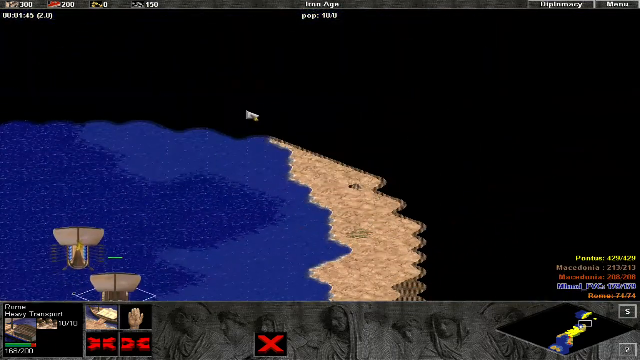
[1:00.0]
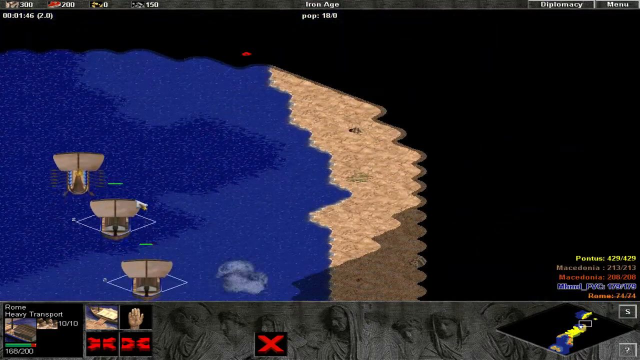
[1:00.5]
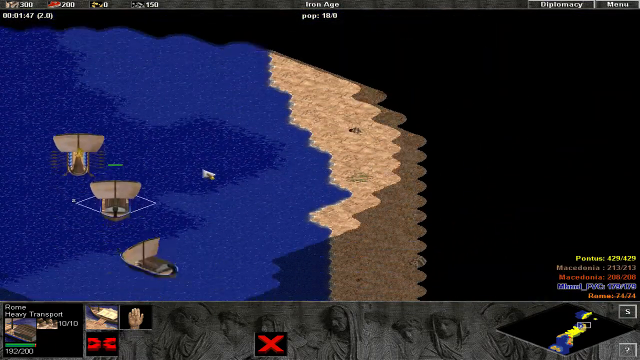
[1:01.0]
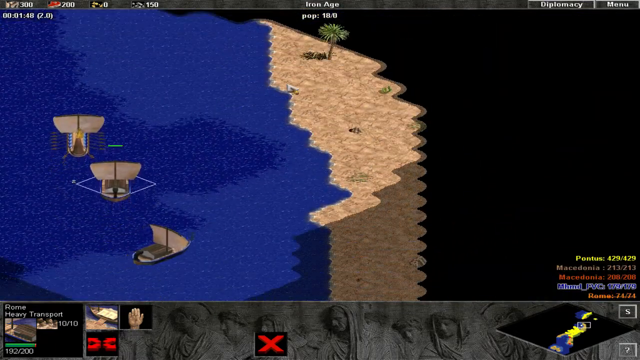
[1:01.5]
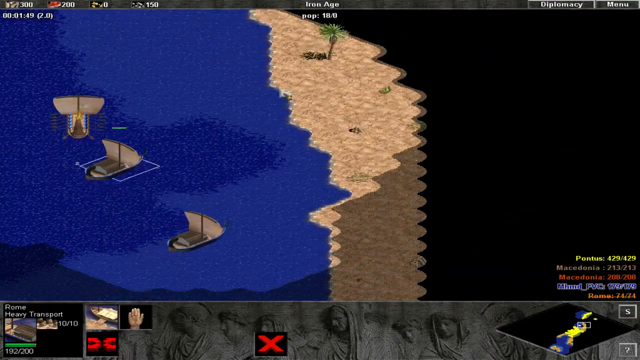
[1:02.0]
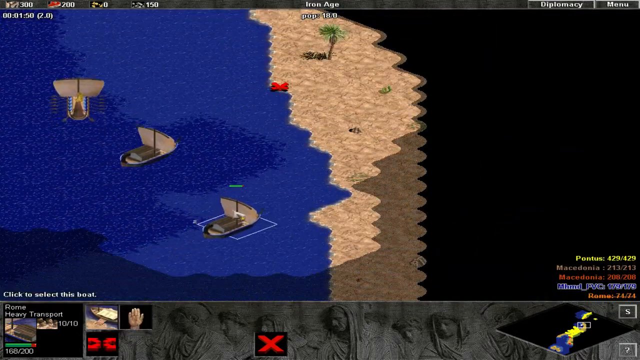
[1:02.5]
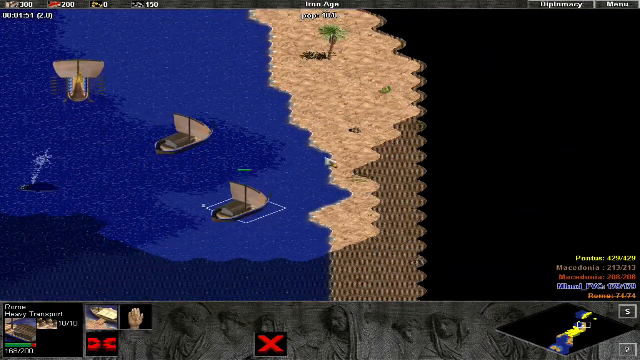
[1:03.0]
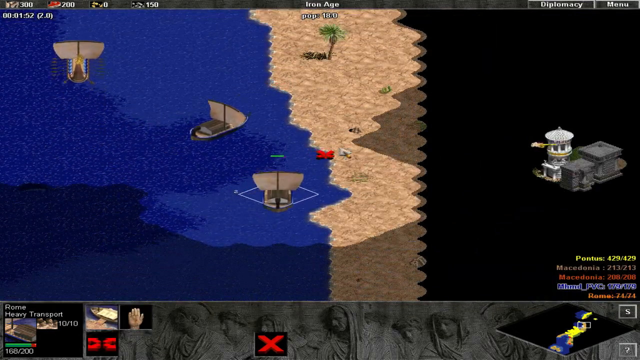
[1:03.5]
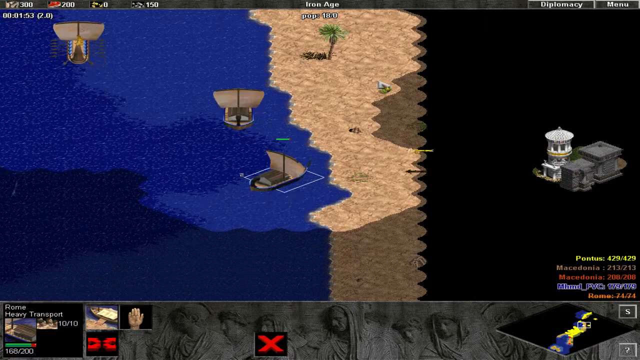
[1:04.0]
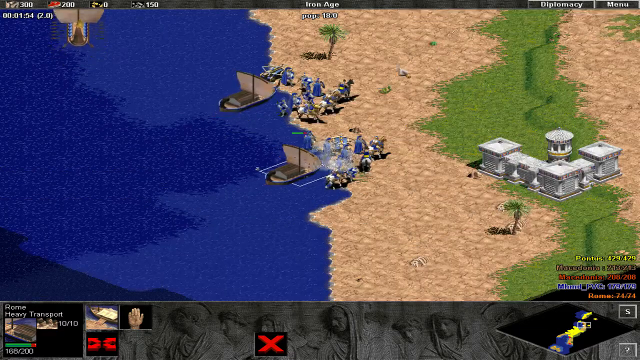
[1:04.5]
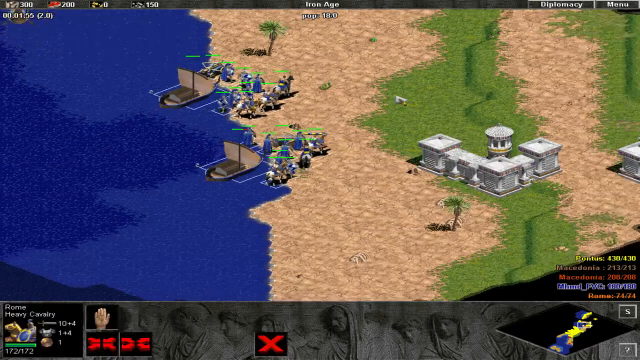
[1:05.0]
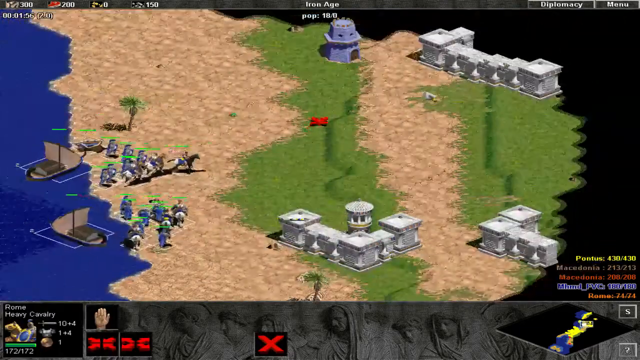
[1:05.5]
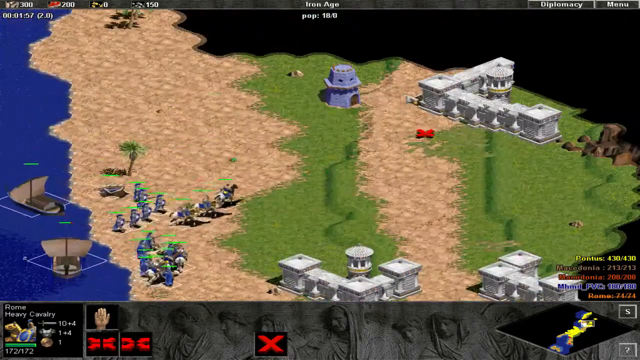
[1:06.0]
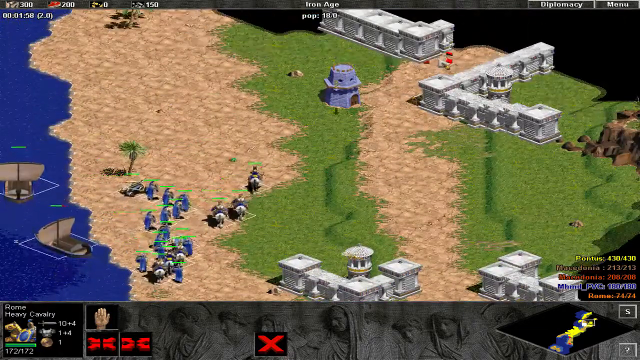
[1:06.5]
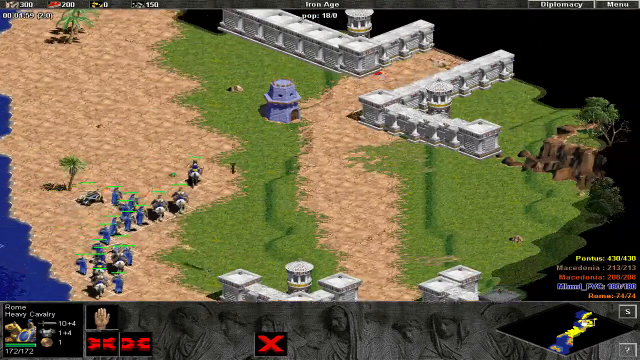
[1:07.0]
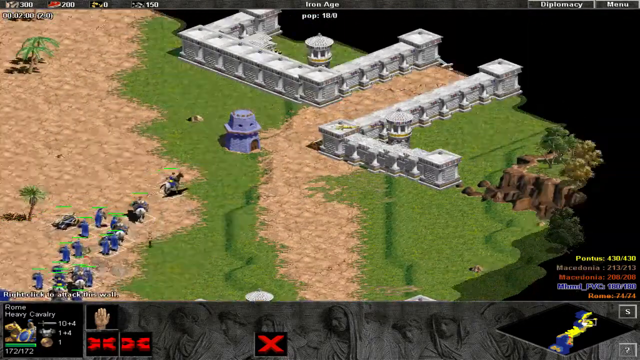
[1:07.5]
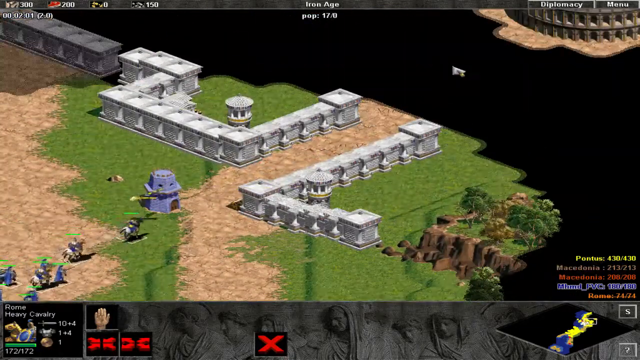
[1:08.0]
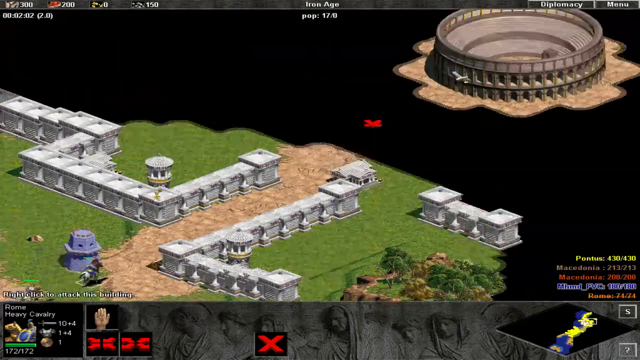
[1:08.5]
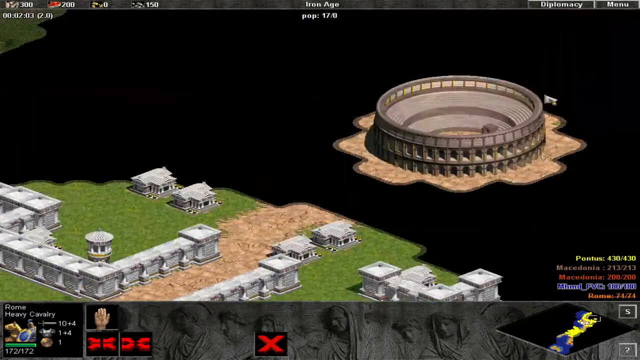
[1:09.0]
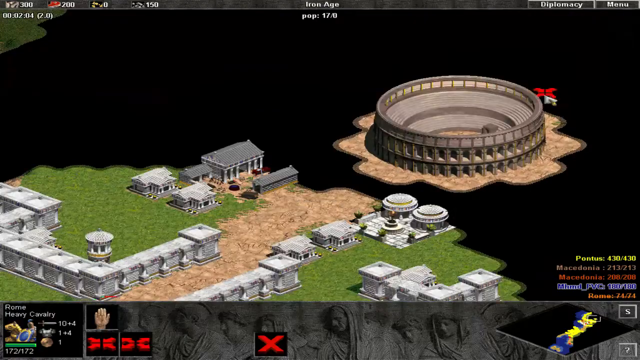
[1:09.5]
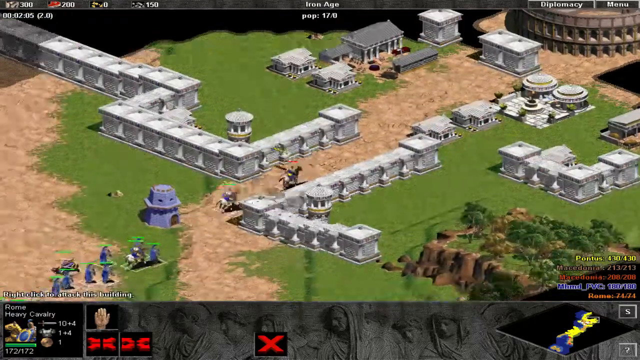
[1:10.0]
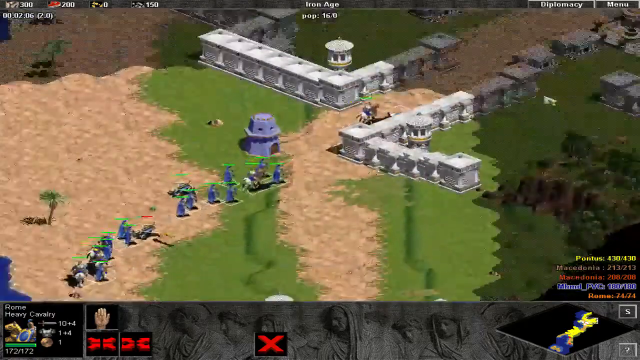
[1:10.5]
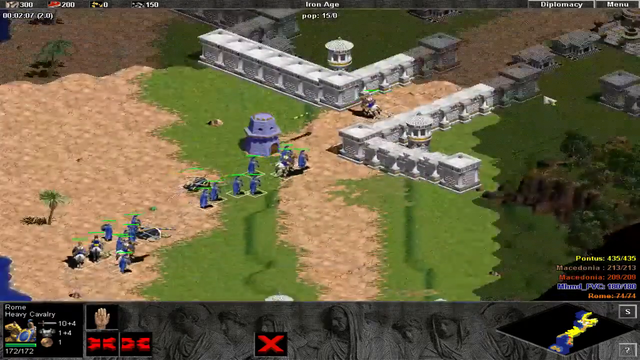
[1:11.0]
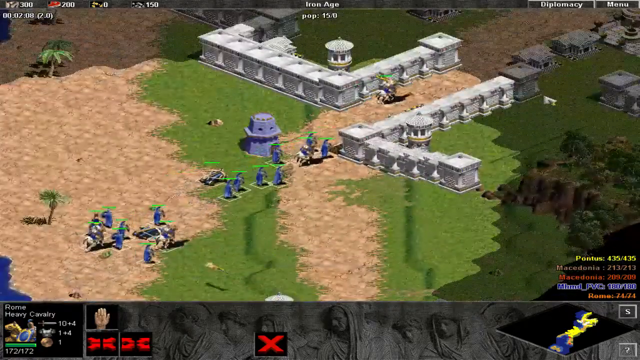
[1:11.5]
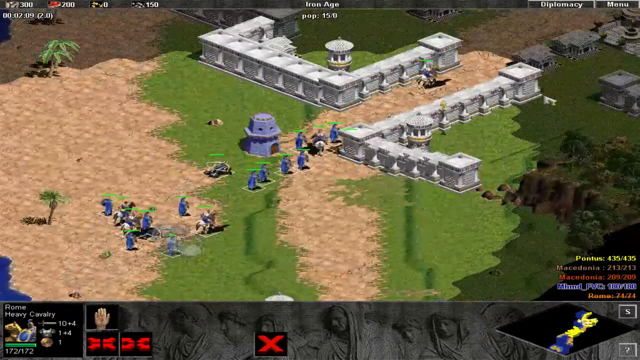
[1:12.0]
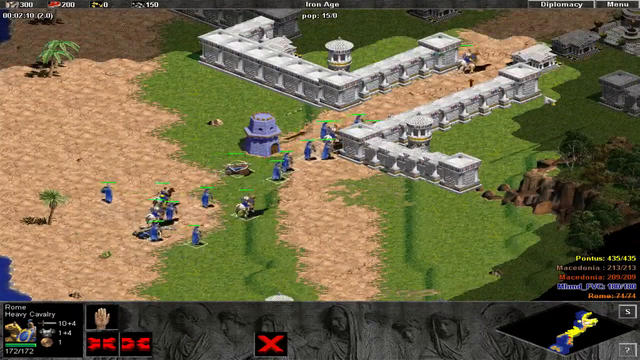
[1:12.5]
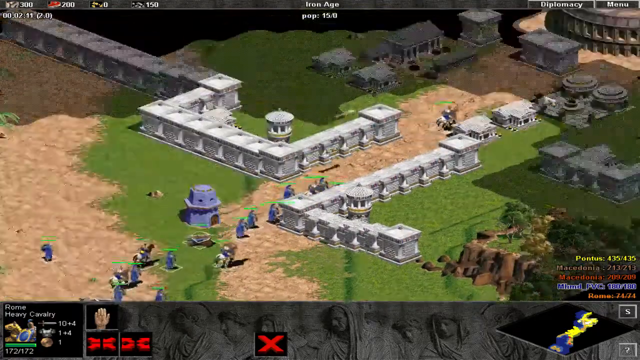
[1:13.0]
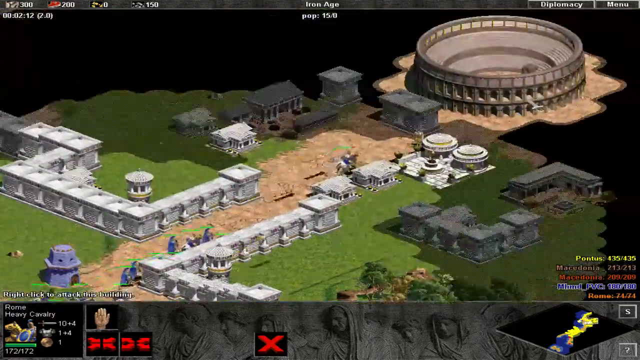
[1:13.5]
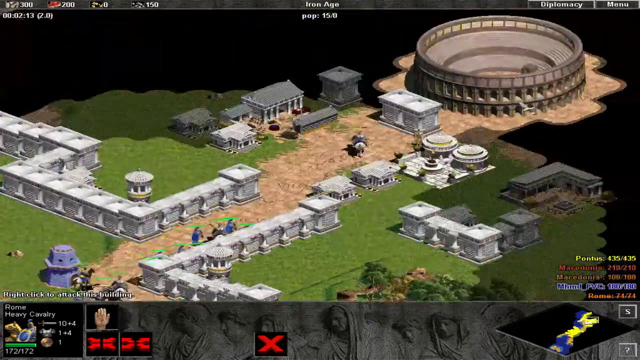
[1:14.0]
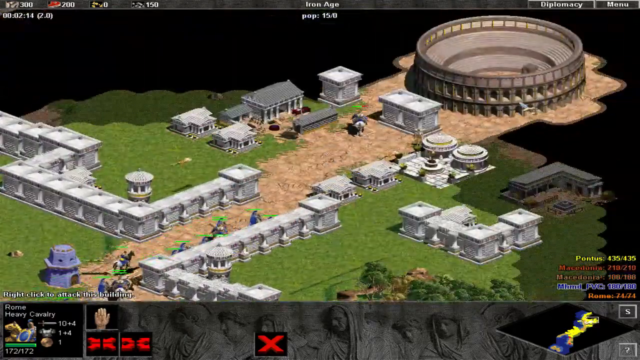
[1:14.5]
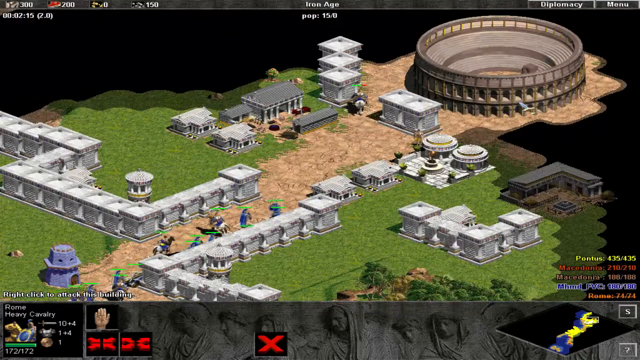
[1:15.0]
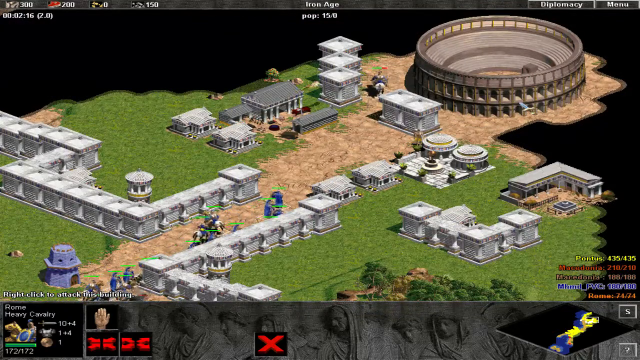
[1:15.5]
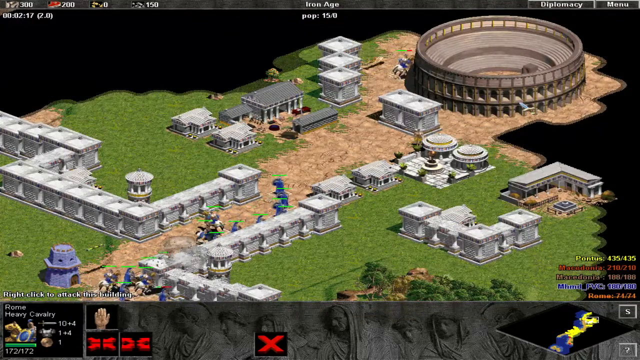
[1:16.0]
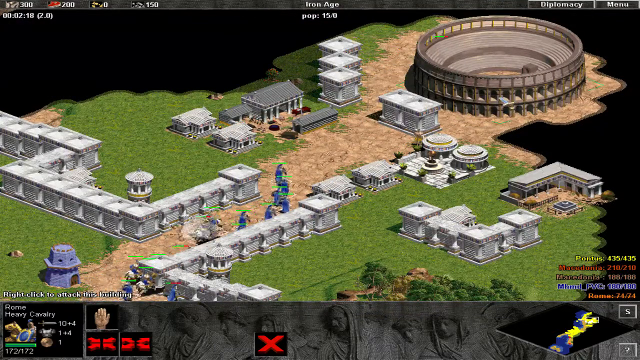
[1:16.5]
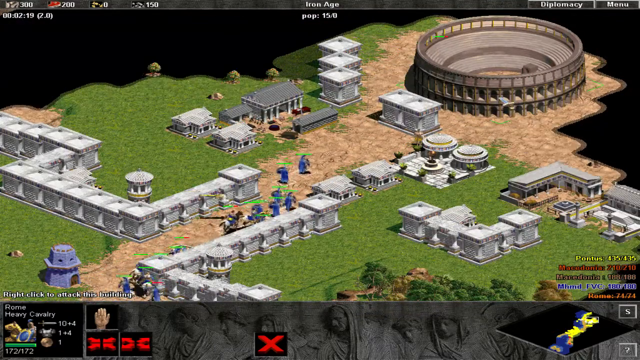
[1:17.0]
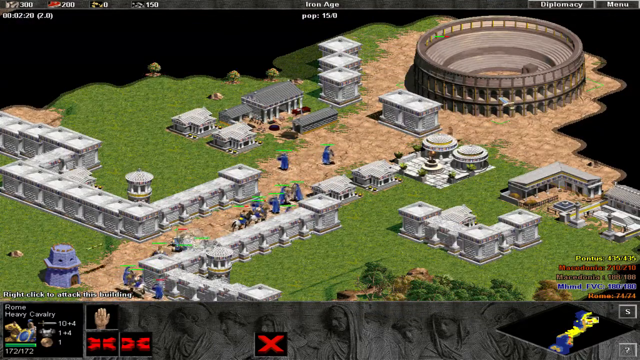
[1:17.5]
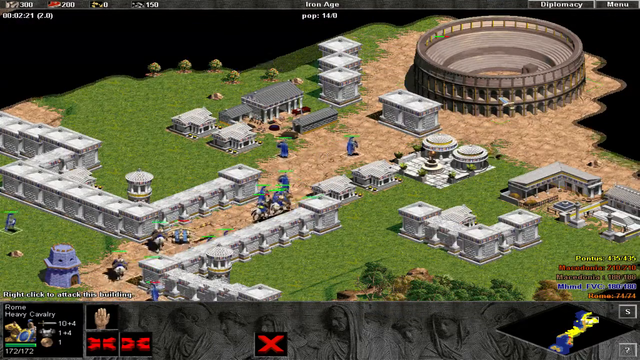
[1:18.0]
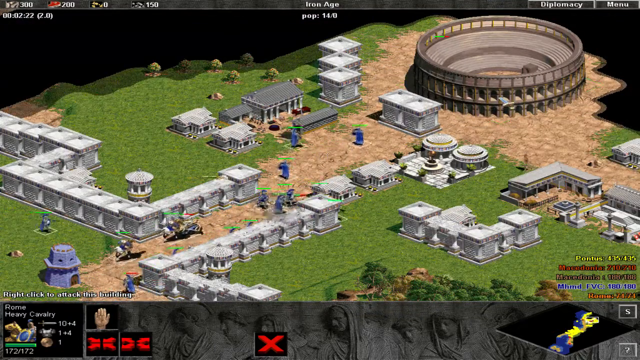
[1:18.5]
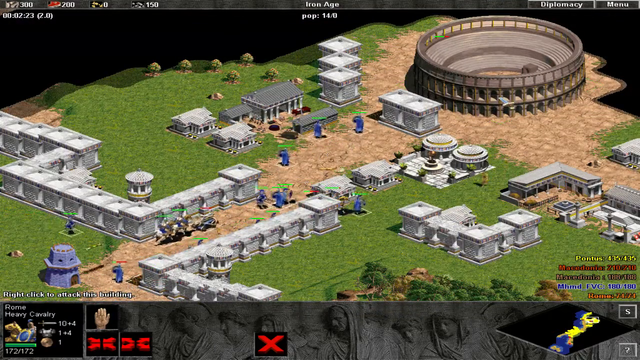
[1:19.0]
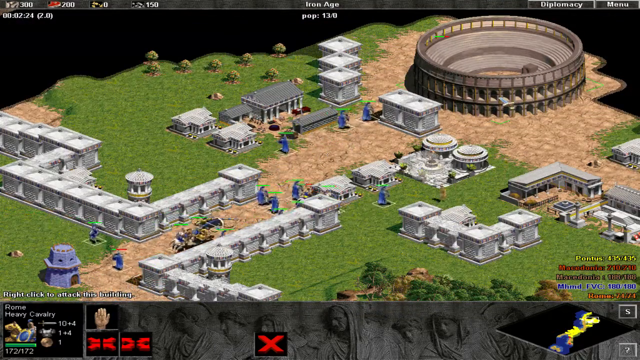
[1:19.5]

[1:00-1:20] The three ships are in the bottom left corner, apparently exploring more of the map. Unexplored parts of the map are covered in black shadow, and the map looks like it is divided into hexagonal tiles. Two of the ships pull over to the side to a beach, where what looks like an army of warriors attacks the ships, and the ships attack the warriors, with white fortifications in the back and what looks like a small settlement. The camera pans back up into the settlement, where a building that looks like the Coliseum is visible. There appear to be two different armies of warriors fighting each other in the streets in front of the Coliseum, and the camera pans back up towards the fighting.